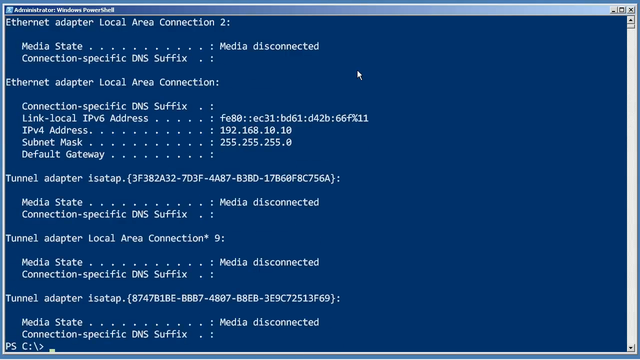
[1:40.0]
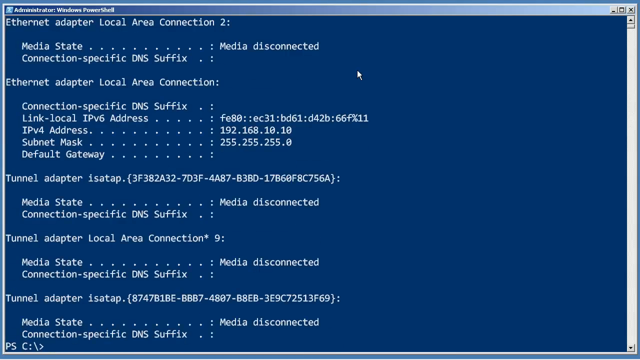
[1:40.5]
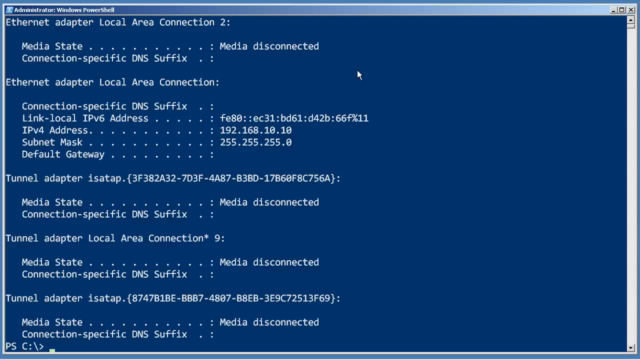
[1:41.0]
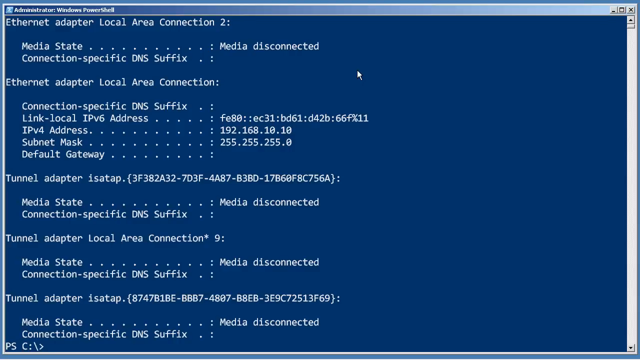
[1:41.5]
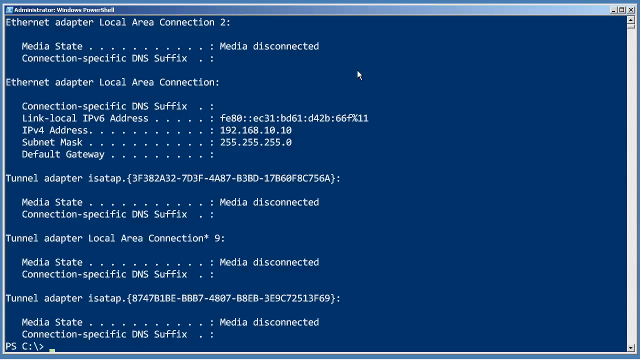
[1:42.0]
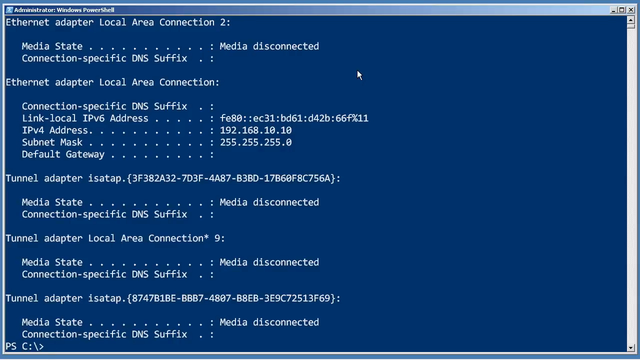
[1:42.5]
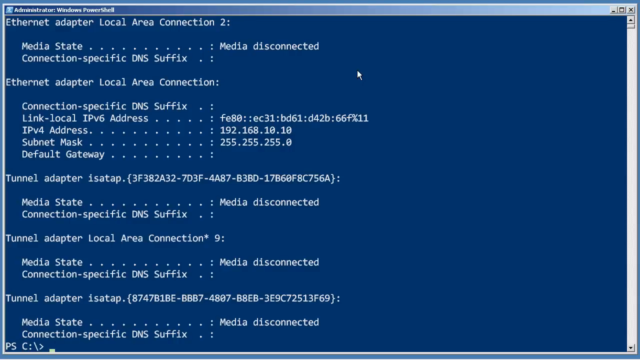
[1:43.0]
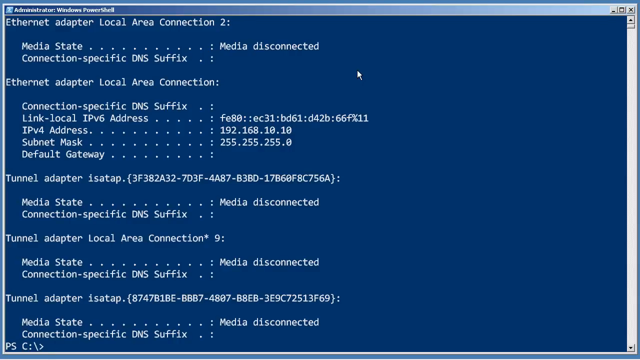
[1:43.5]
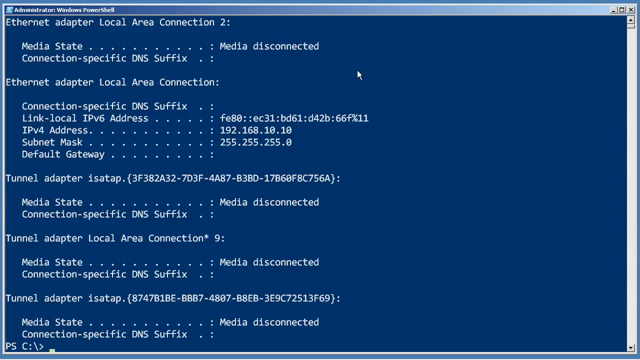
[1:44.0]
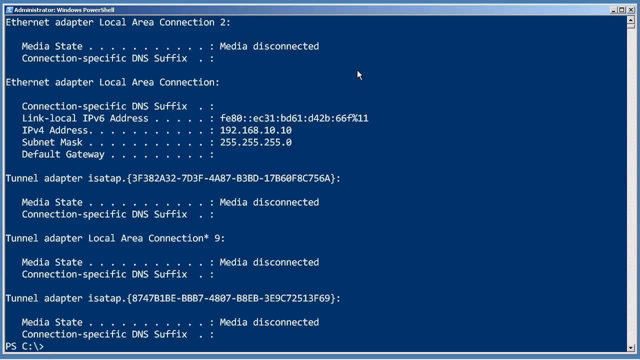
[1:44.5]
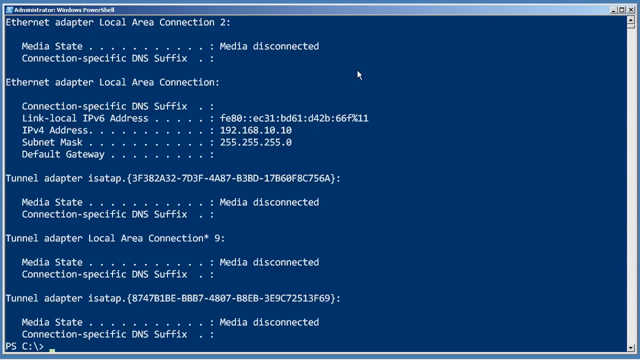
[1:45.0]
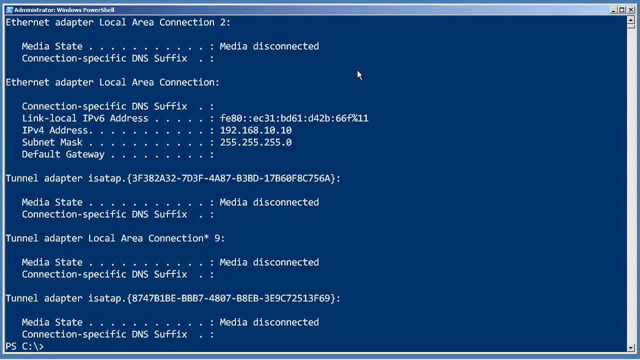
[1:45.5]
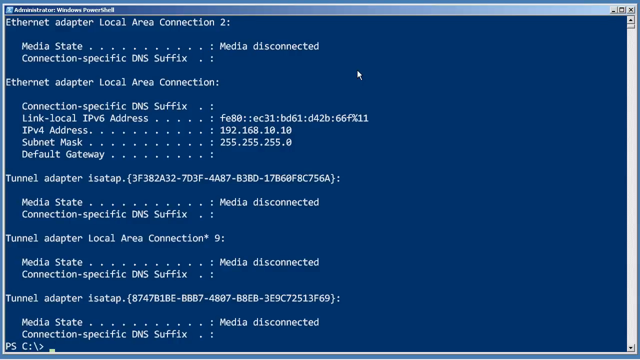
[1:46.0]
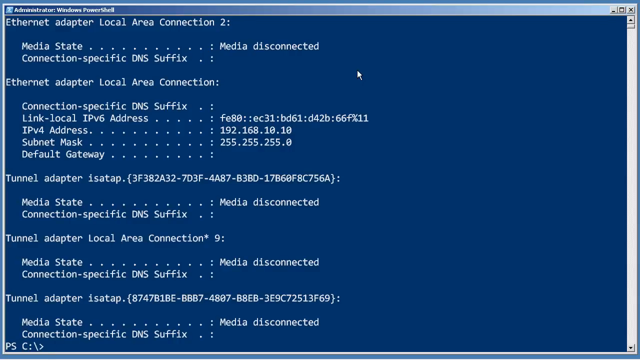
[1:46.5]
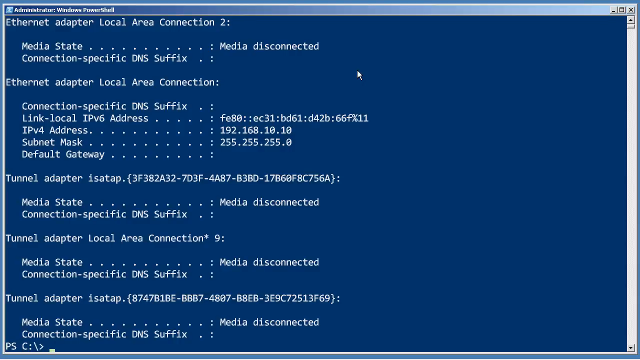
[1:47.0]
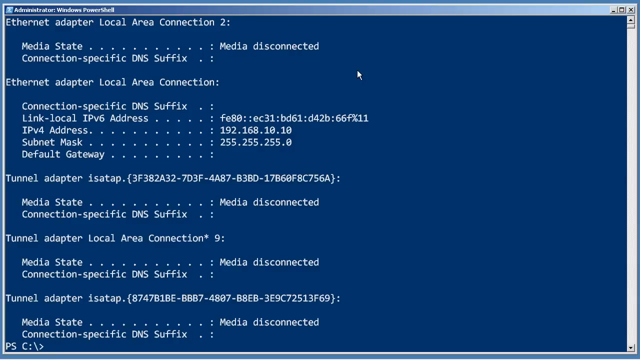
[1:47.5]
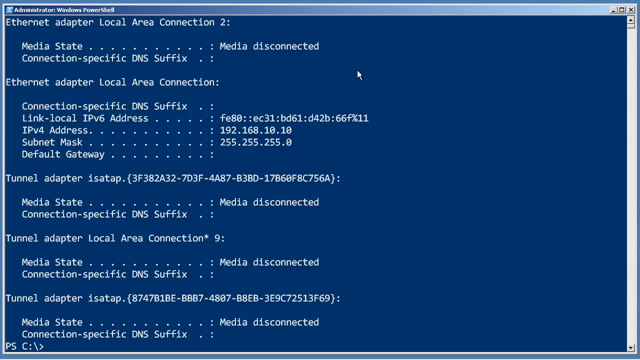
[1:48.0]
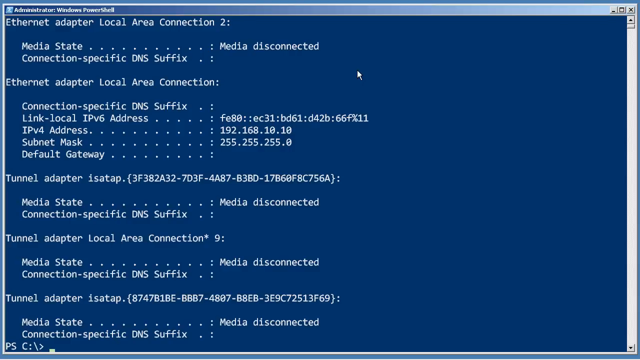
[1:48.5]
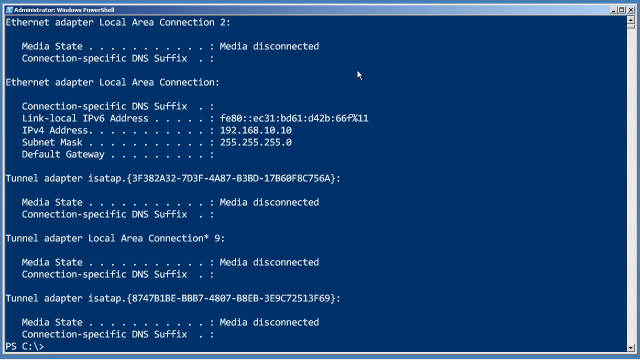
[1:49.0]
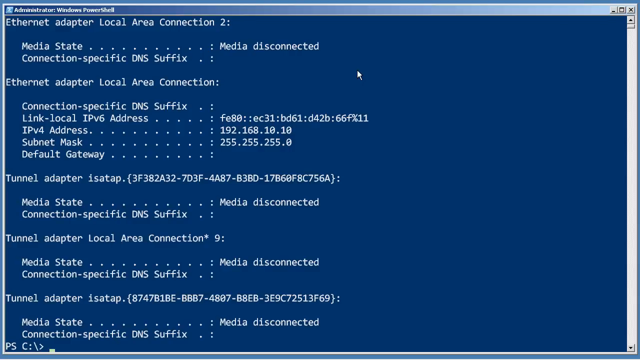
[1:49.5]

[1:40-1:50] The same line of text that was earlier at the top left of the screen is now in the bottom left corner, the very last visible line, reading "PS C:\>", with the blinking typing cursor again present in the bottom left-hand corner. The background remains a solid dark blue with no gradients, and the white text contrasts heavily against it, making it very easy to read.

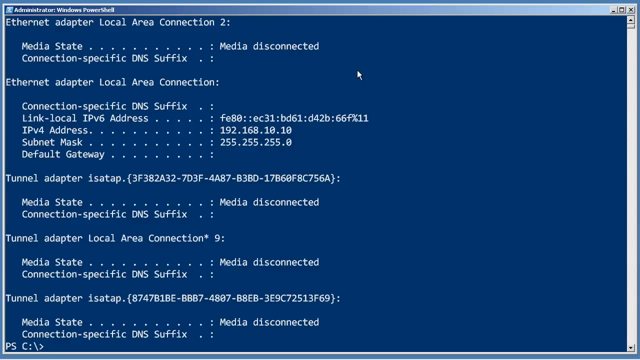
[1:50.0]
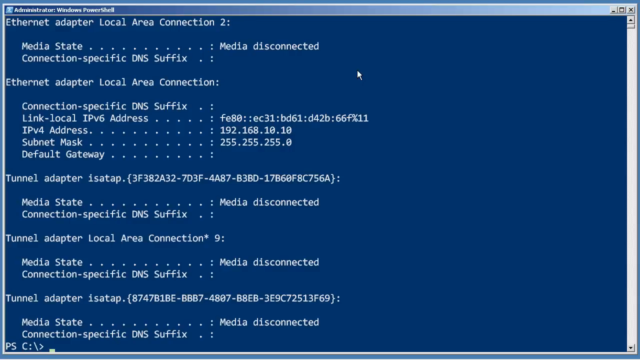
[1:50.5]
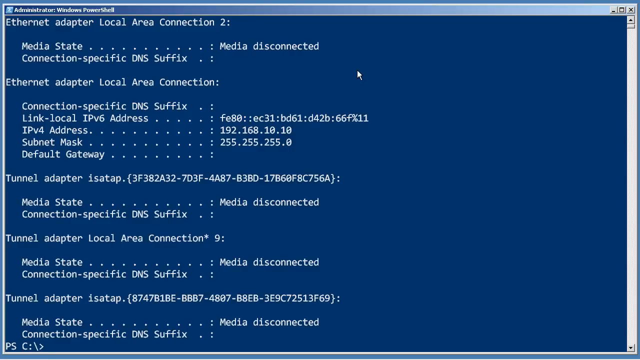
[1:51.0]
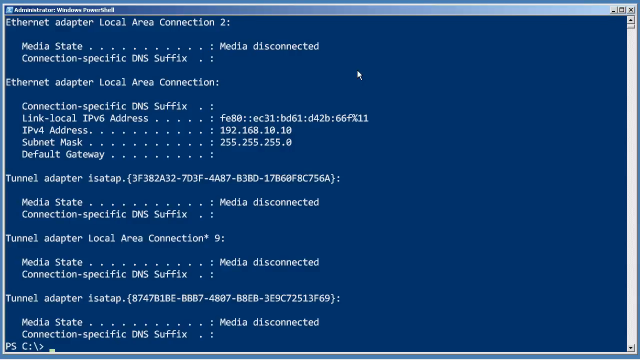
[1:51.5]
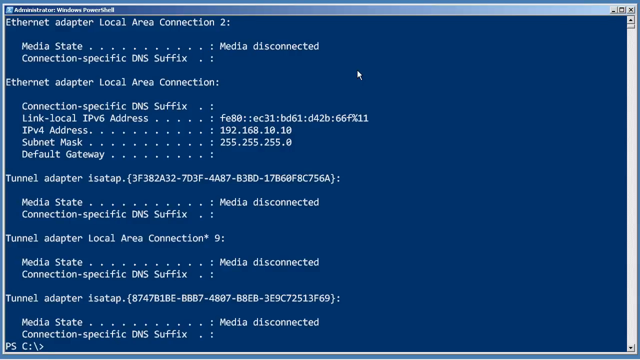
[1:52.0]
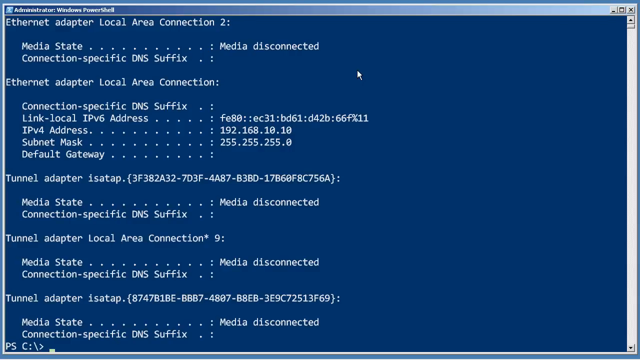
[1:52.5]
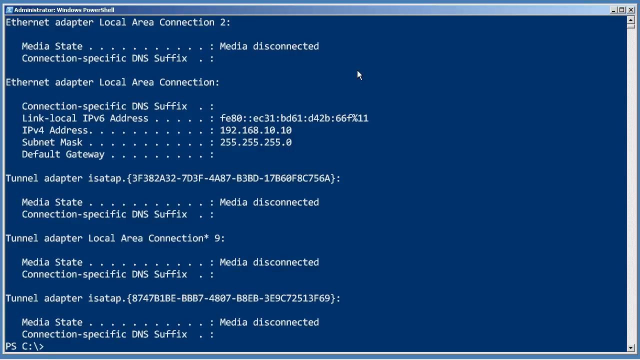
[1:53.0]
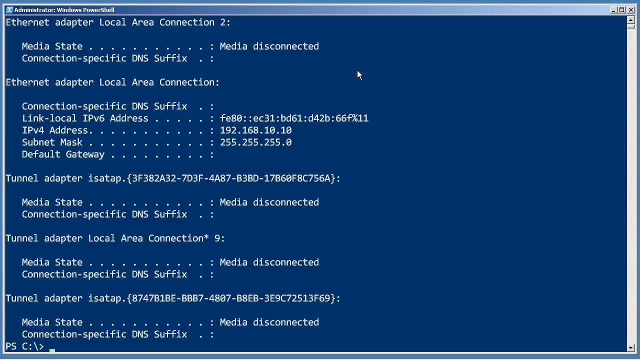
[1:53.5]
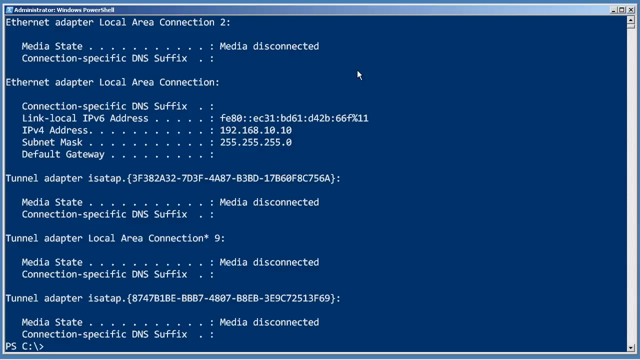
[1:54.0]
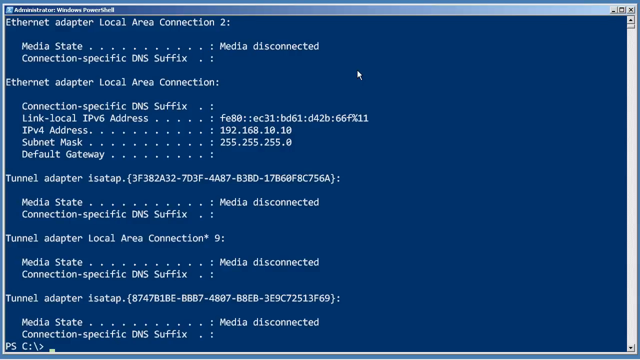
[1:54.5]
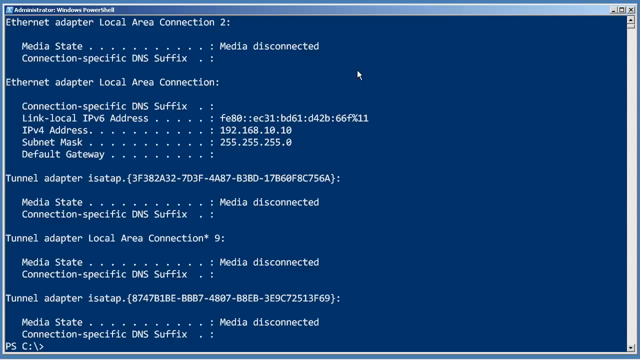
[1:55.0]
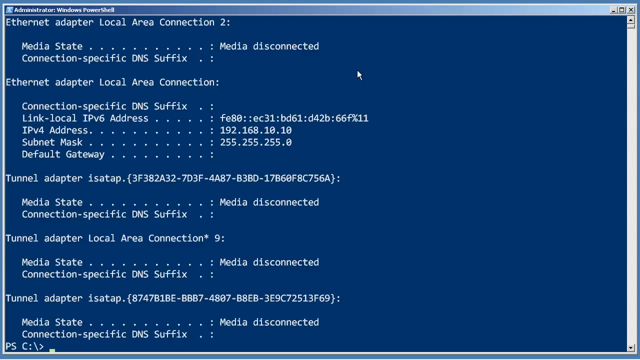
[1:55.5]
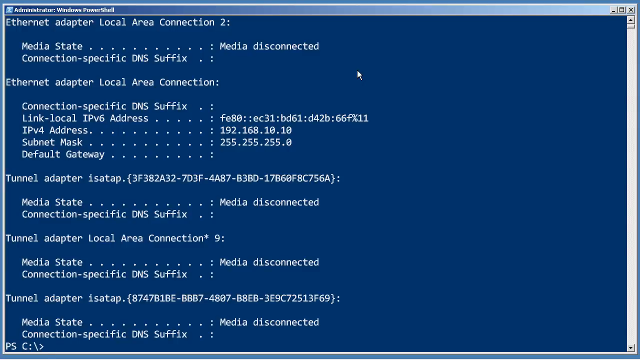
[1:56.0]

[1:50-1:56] Nothing on the screen changes. The mouse cursor stays in the same position, near the top along the fifth line of text and near the center of the screen. The text shows five headings, each with information beneath it: "Ethernet Adapter Local Area Connection 2", "Ethernet Adapter Local Area Connection", "Tunnel Adapter ISATAP", "Tunnel Adapter Local Area Connection* 9", and finally "Tunnel Adapter ISATAP" followed by a different series of letters and numbers. All of it is in a basic white font on a solid dark blue background in the Windows PowerShell application.